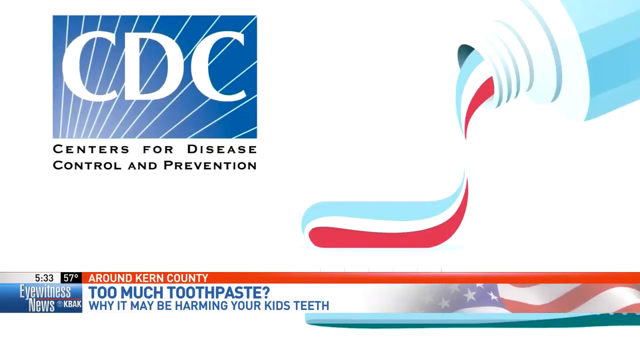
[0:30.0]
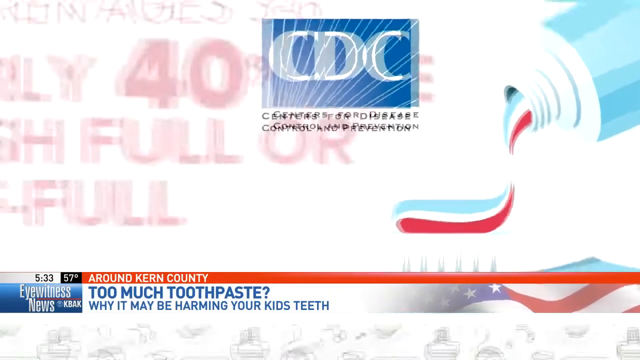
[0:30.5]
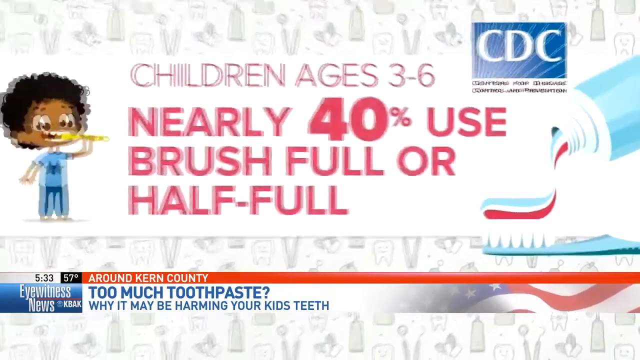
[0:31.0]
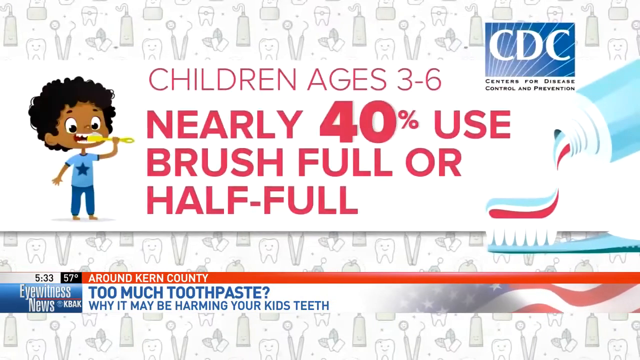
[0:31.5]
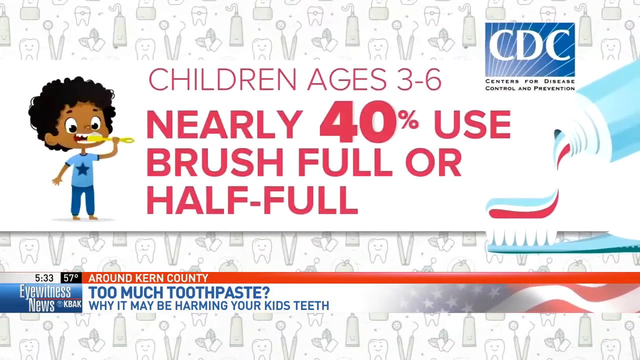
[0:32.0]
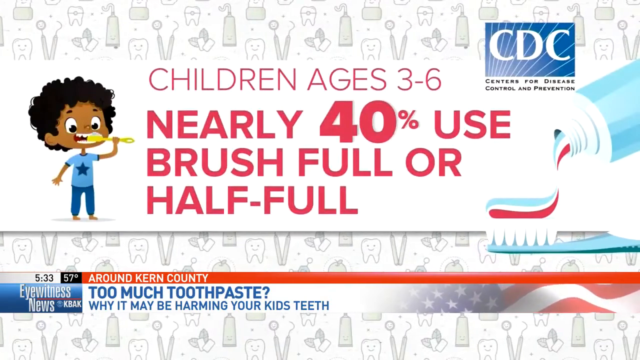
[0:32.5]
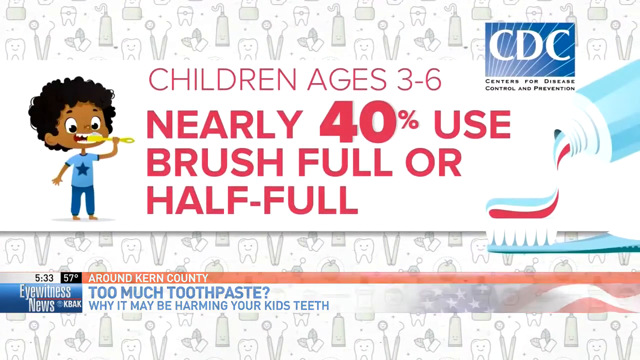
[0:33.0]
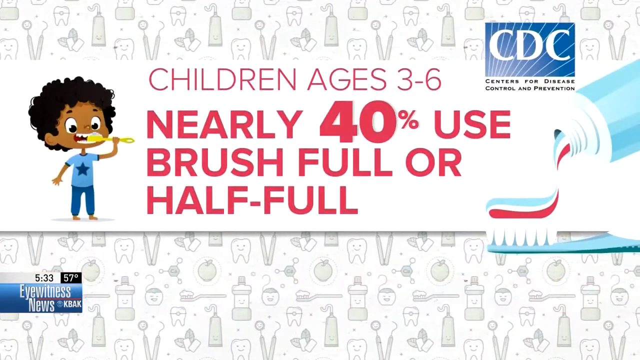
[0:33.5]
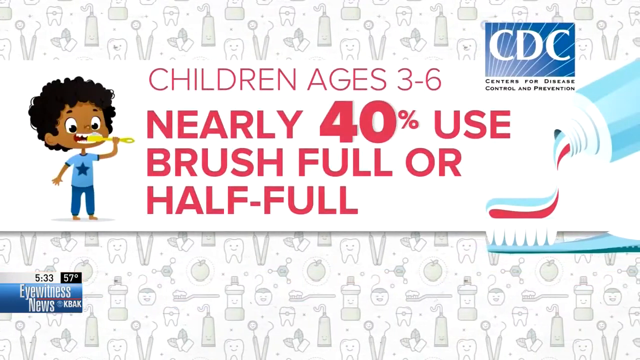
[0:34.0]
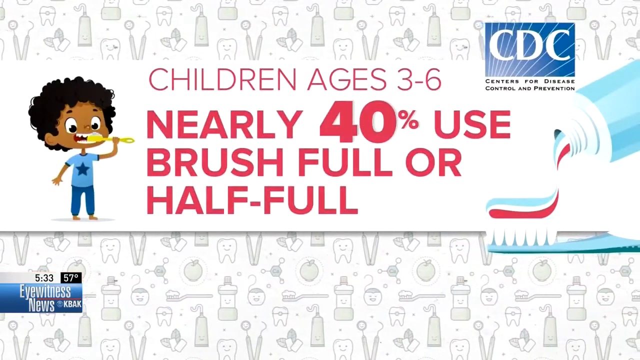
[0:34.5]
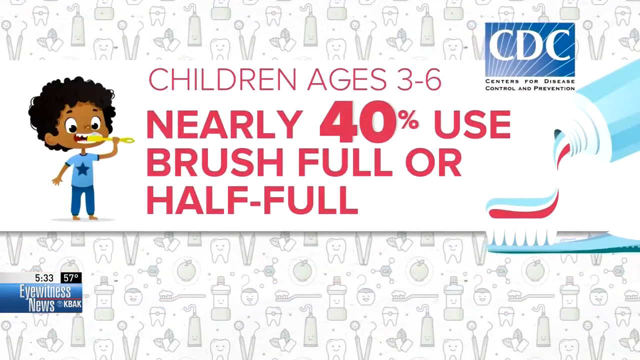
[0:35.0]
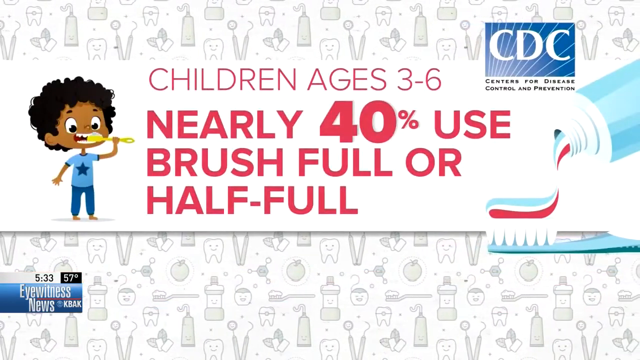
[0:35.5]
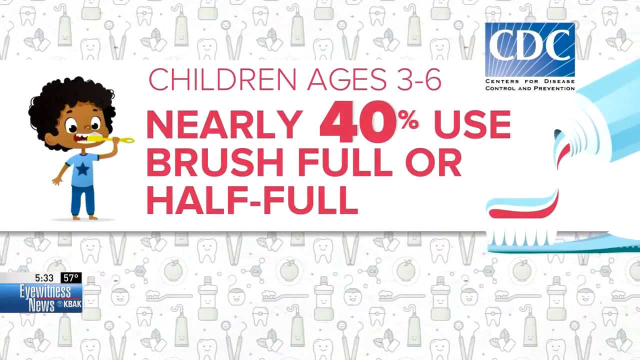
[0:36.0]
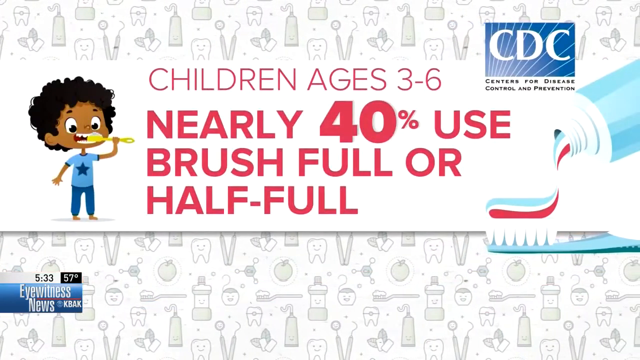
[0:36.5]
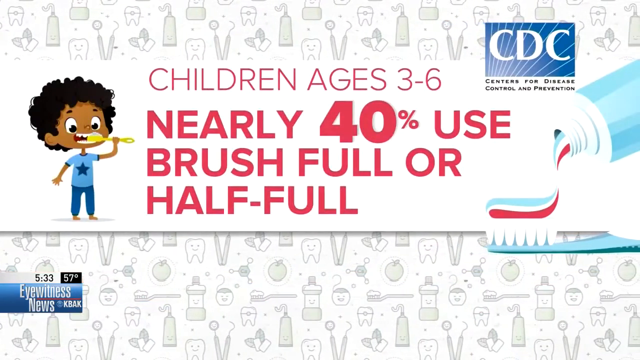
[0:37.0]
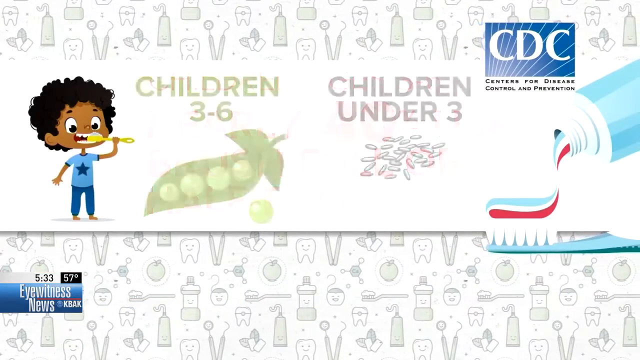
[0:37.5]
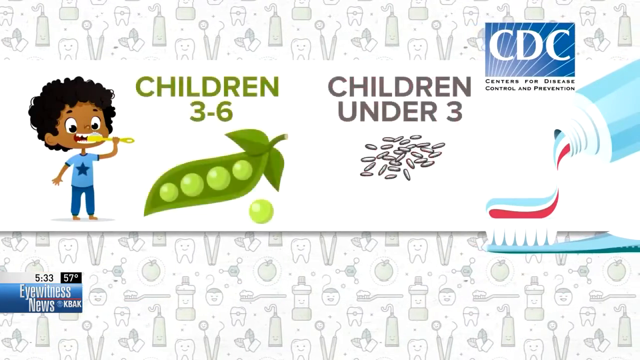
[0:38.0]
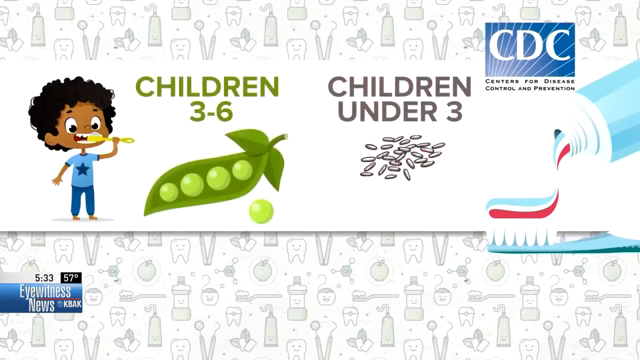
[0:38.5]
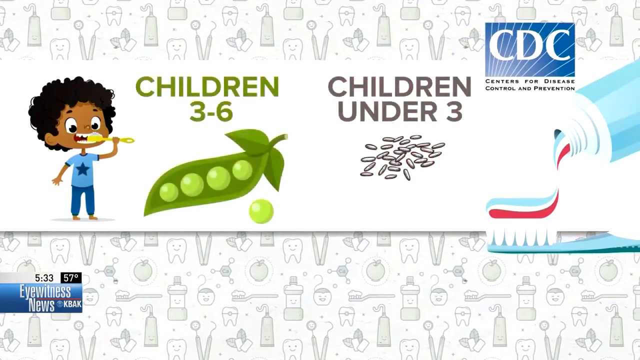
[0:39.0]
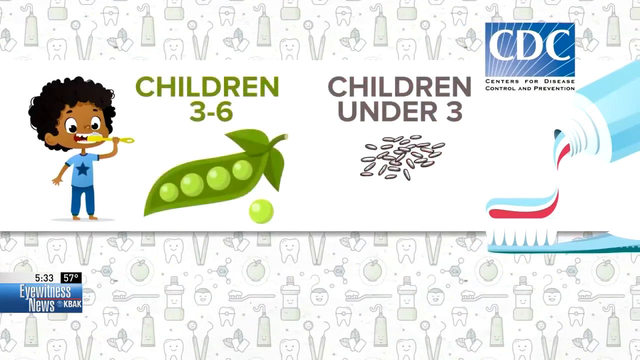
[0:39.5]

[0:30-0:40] A screen shows a graphic with no people. On the left it reads "CDC, Center for Disease Control and Prevention", and on the right is an image of a toothpaste tube with toothpaste squirting out. The video then zooms out a bit and a new graphic appears on the left side of the screen, with words reading "children ages three to six, nearly 40% use brushful or half-full". On the left is a still cartoon image of a boy brushing his teeth with a yellow toothbrush. Behind this is a background of illustrated dental-related objects, including teeth with smiley faces, tubes of toothpaste, and dental tools, slowly scrolling to the right behind the words. There is a green pea image with a pea pod, with "children three to six" above it, and on the right "children under three" with grains of rice.